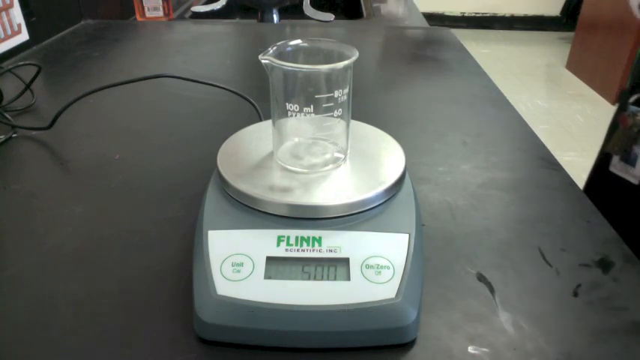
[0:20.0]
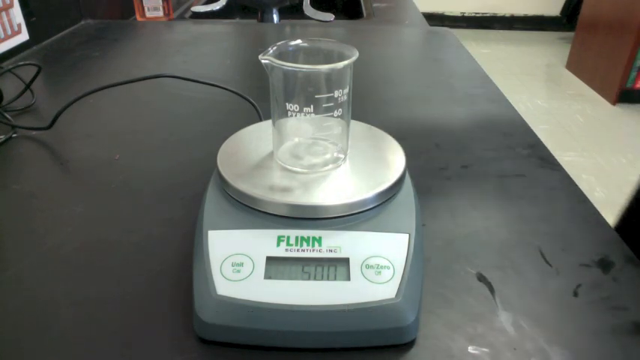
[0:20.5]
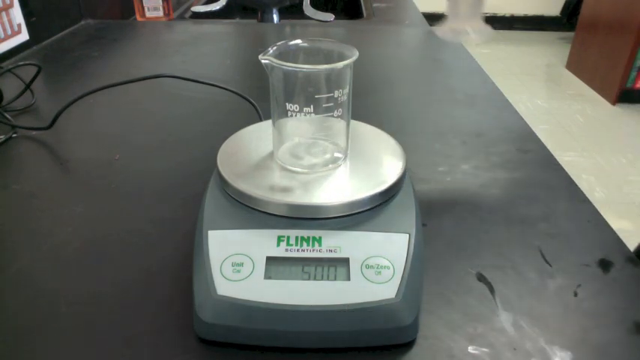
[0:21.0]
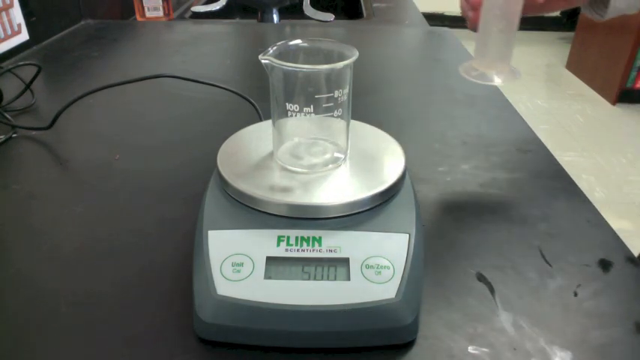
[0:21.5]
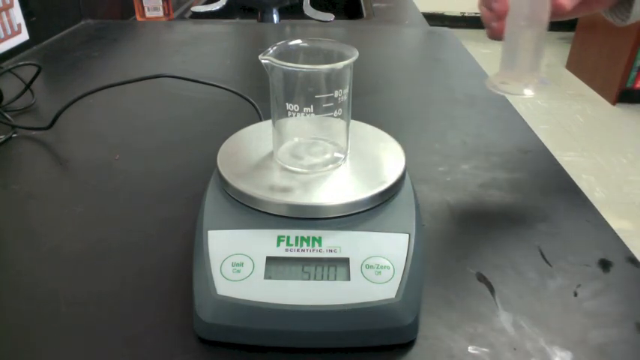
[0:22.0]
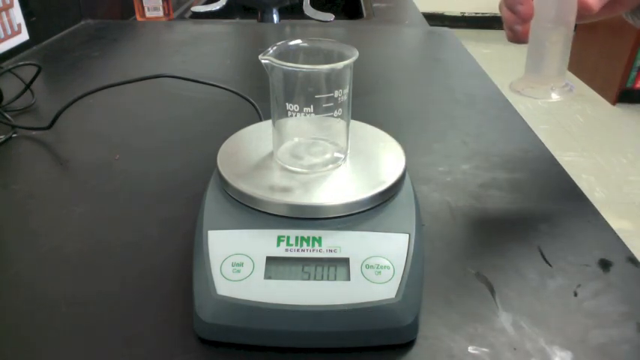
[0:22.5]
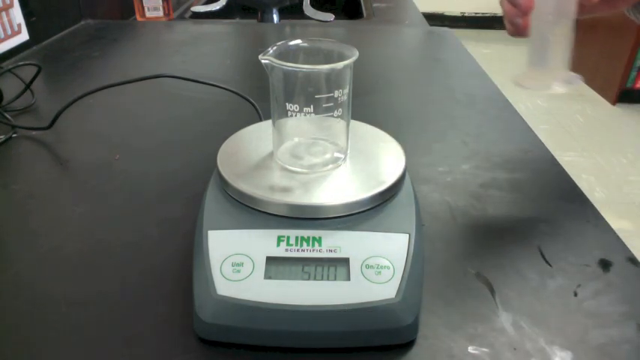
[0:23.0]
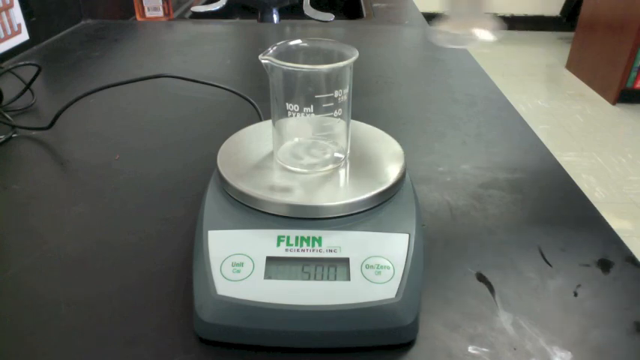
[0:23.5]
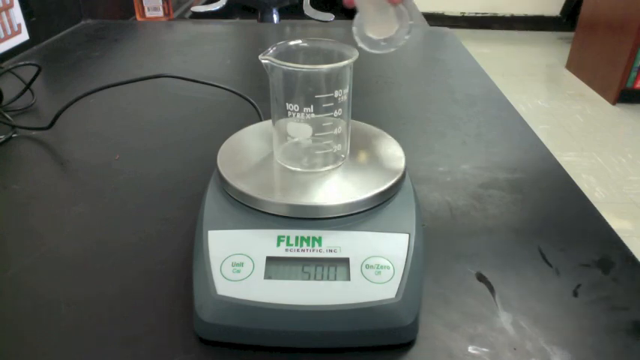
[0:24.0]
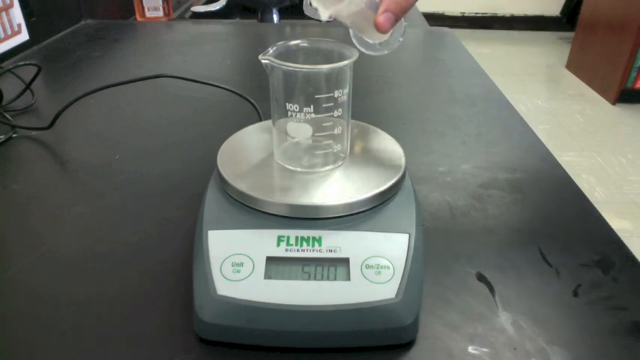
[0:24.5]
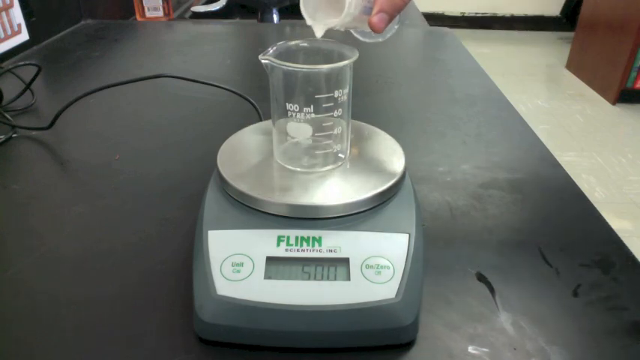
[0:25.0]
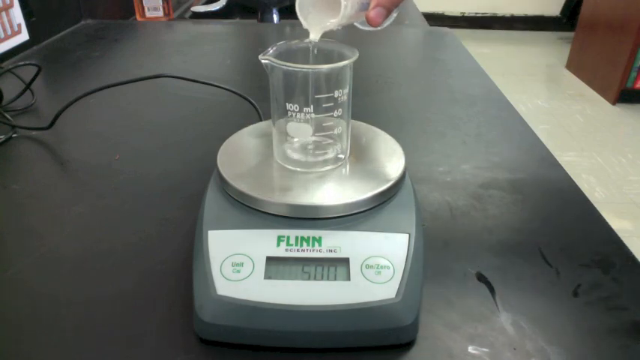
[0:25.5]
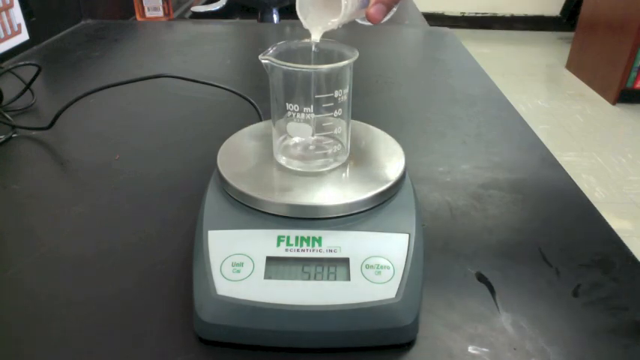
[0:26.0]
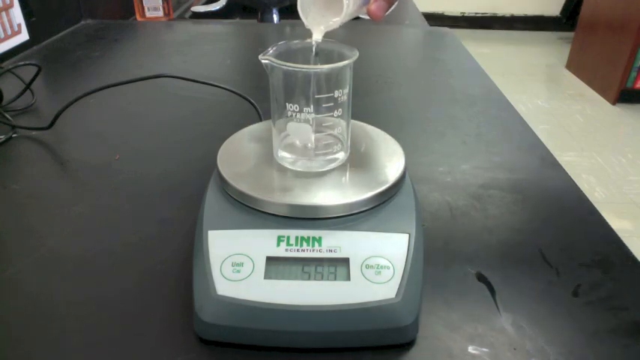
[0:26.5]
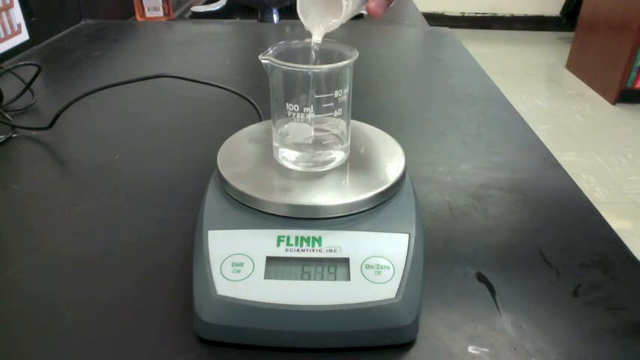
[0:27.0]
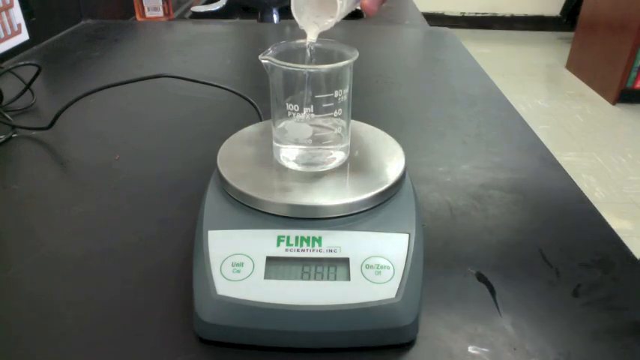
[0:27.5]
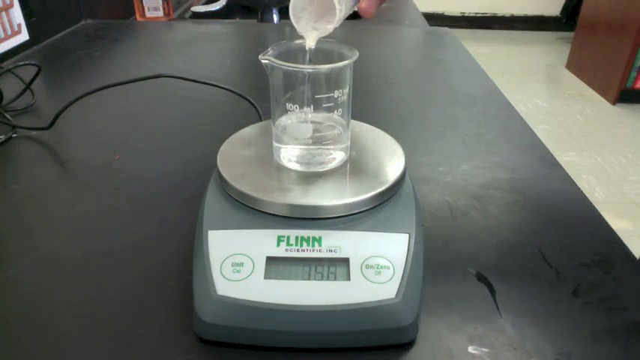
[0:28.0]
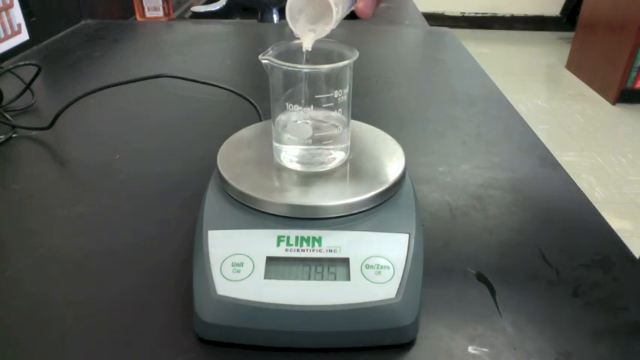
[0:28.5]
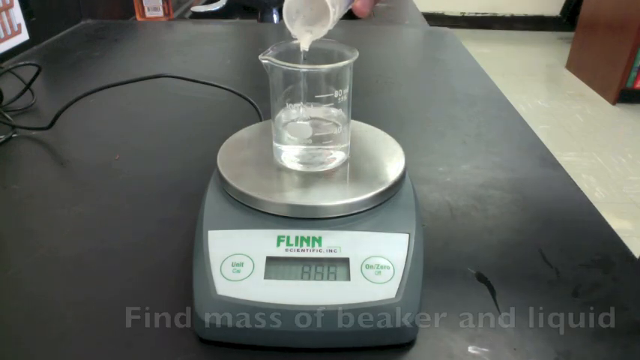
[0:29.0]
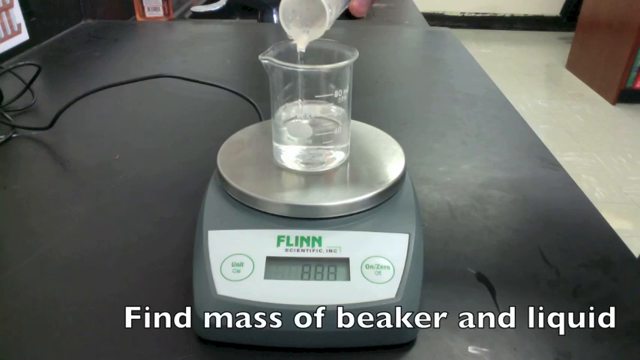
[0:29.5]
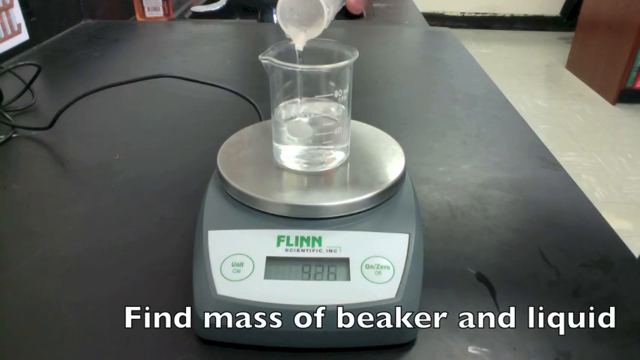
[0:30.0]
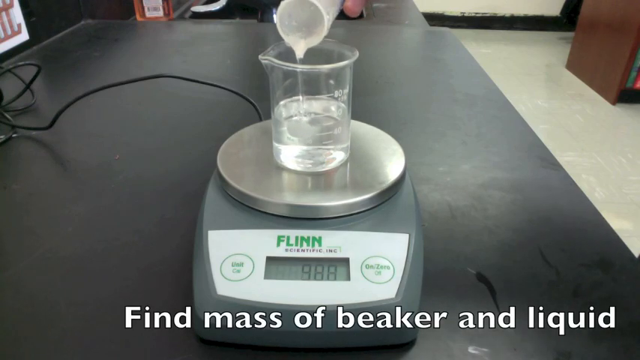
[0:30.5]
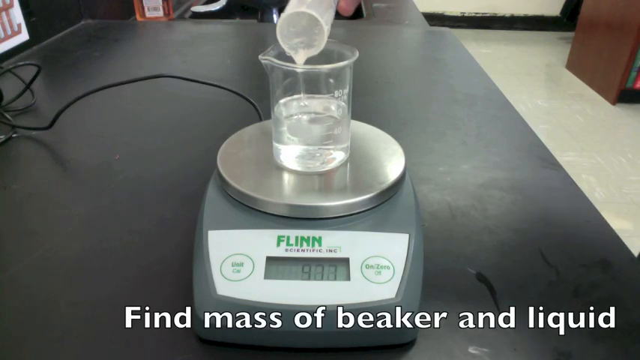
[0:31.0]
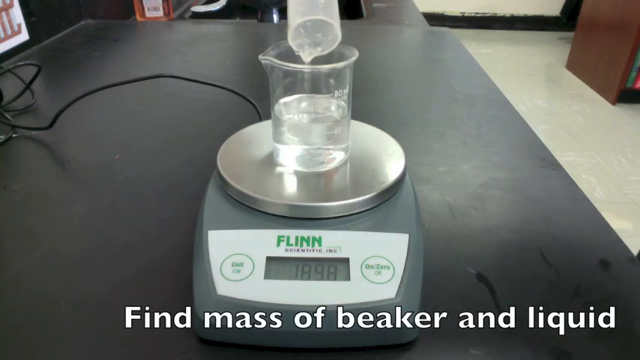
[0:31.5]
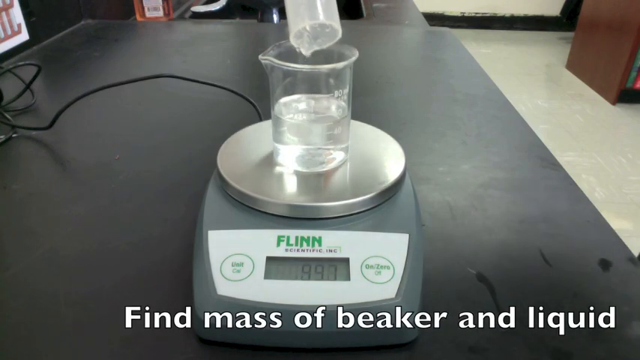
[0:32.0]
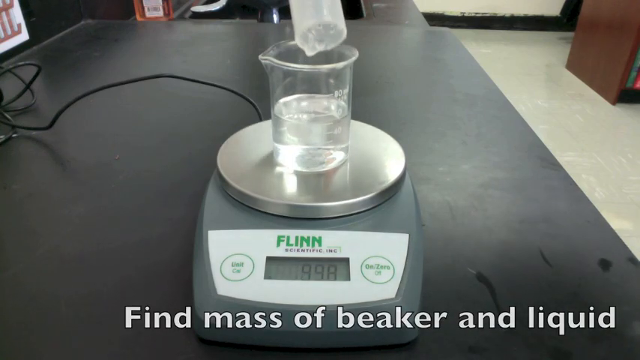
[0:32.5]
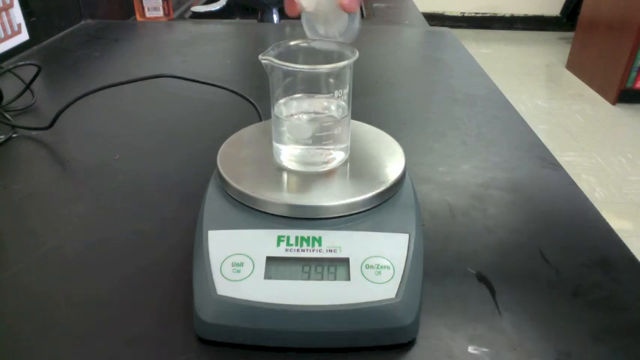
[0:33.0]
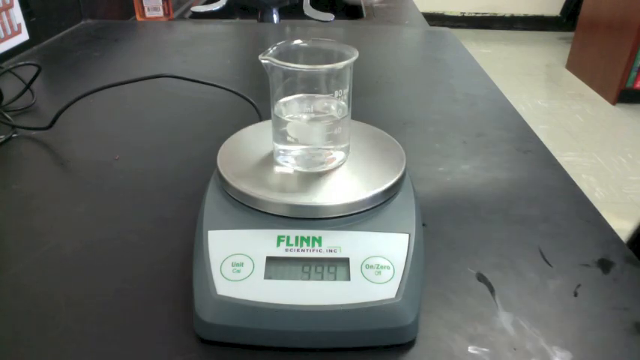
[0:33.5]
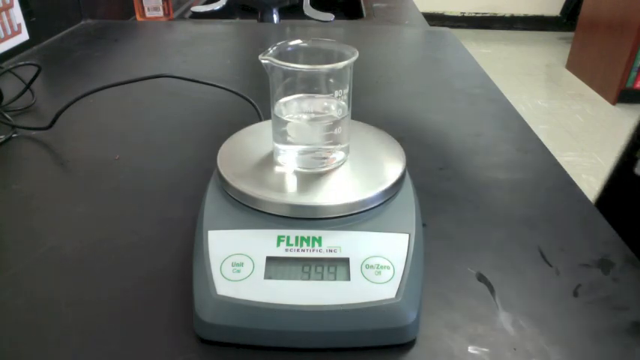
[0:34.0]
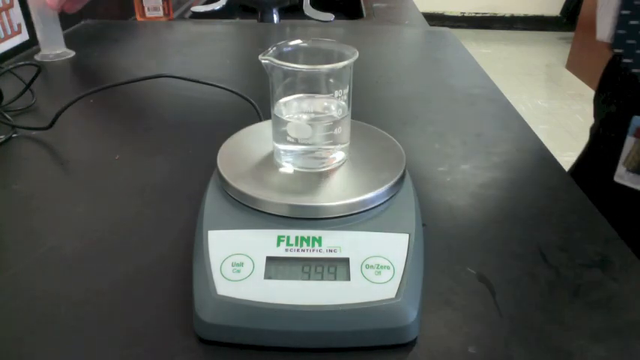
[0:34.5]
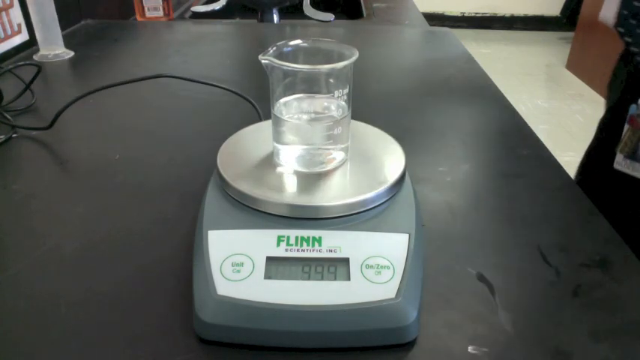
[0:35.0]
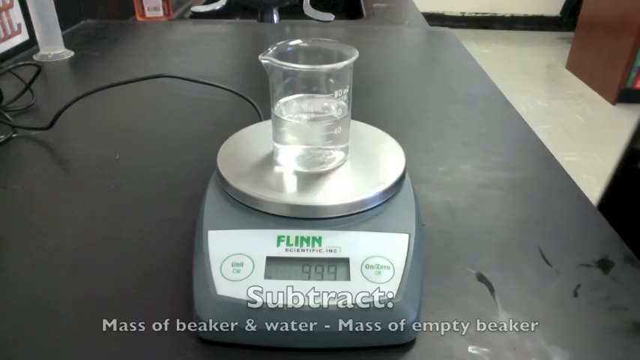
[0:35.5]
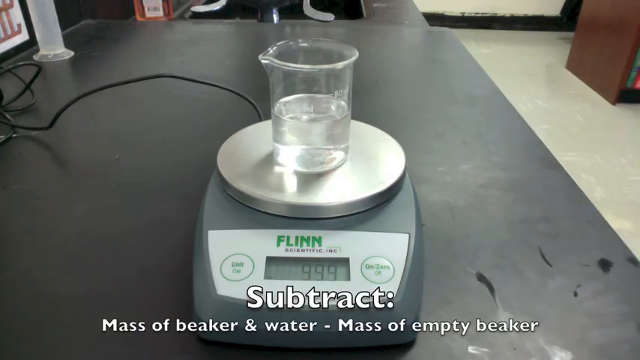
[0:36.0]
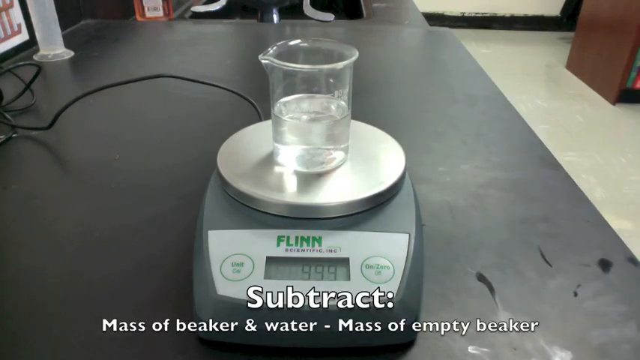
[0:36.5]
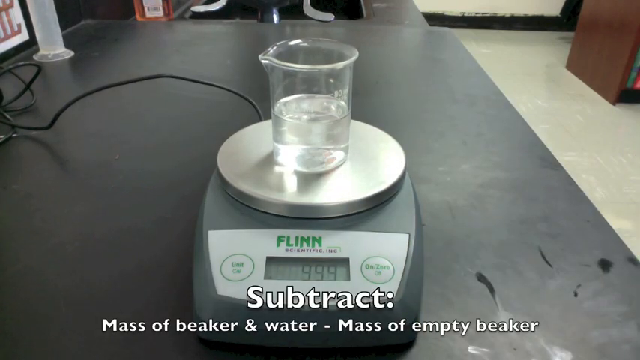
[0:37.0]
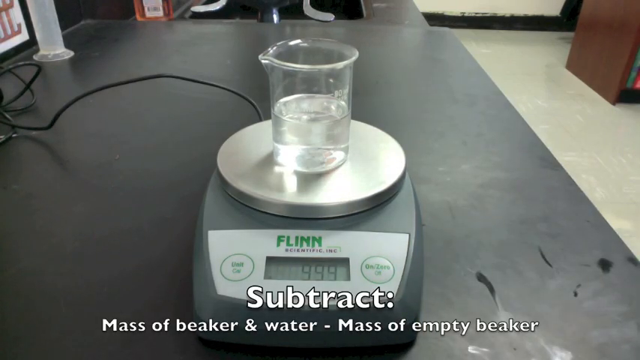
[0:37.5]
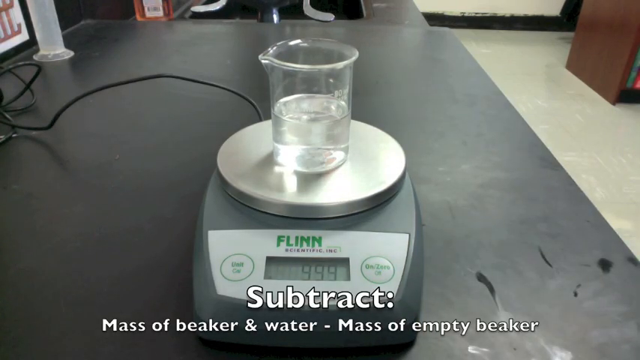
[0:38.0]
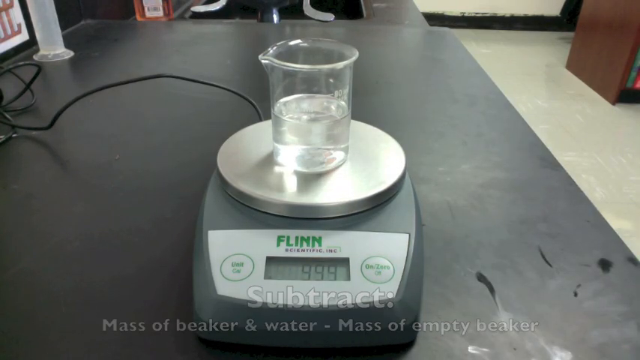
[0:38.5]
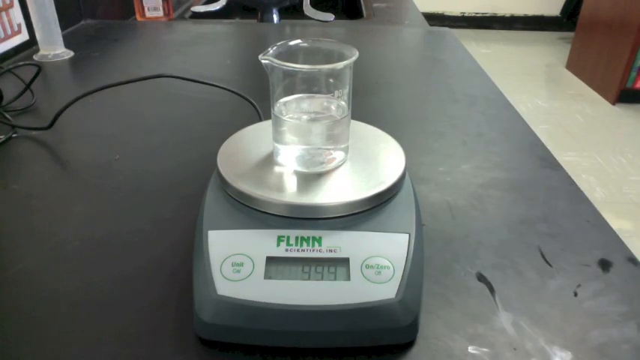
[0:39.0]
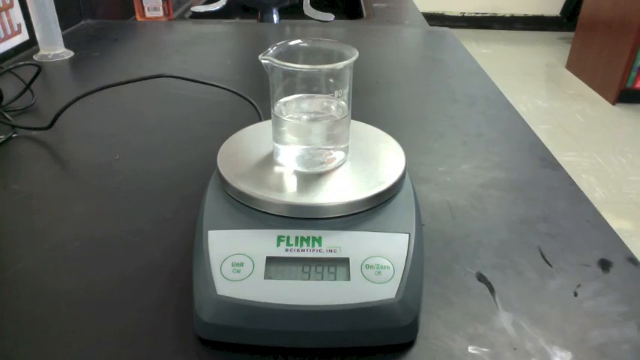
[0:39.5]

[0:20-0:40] A top view, sort of a front view, shows a scale on a black table, with a white tile floor visible in the top right of the screen. The front of the scale says "Flynn" in green letters, and its screen reads 5.00. A person stands on the right side of the screen; his right arm and right hand are visible. He holds a white beaker and pours some liquid into the beaker. The man is Caucasian. Text at the bottom of the screen reads "find mass of beaker and liquid", and the weight then moves to 9.99. Next, text at the bottom reads "subtract mass of beaker and water minus mass of empty beaker". All of the lettering is white. Early on, what looks like a name tag and some keys are visible, possibly on a pair of black pants.